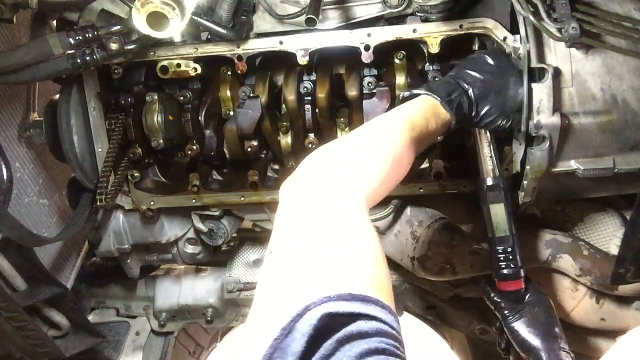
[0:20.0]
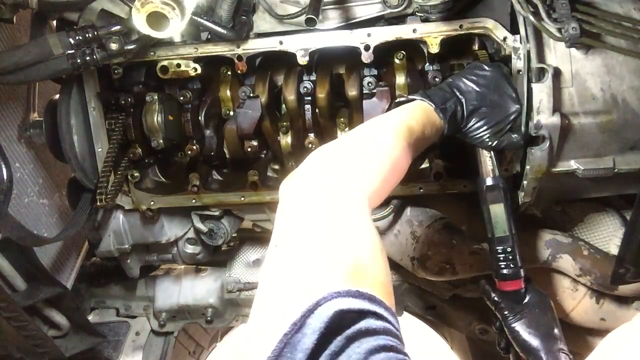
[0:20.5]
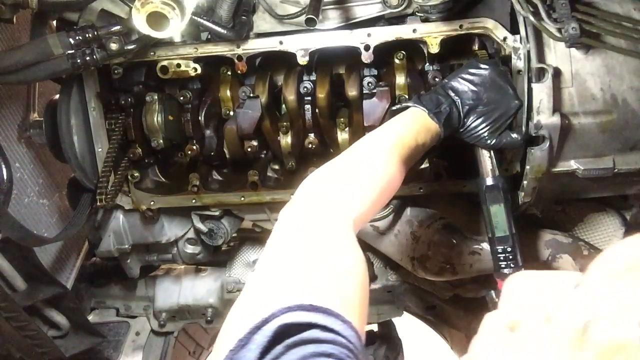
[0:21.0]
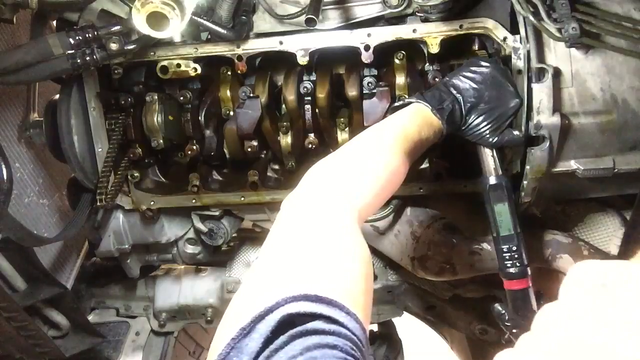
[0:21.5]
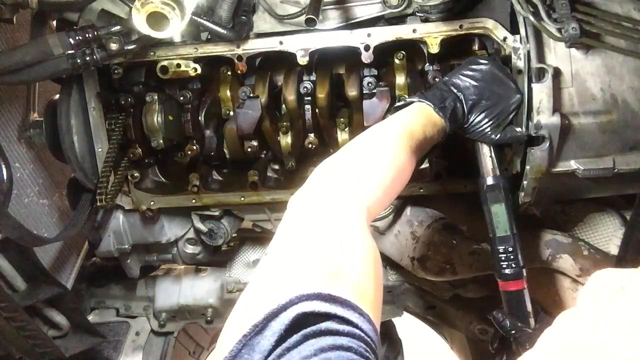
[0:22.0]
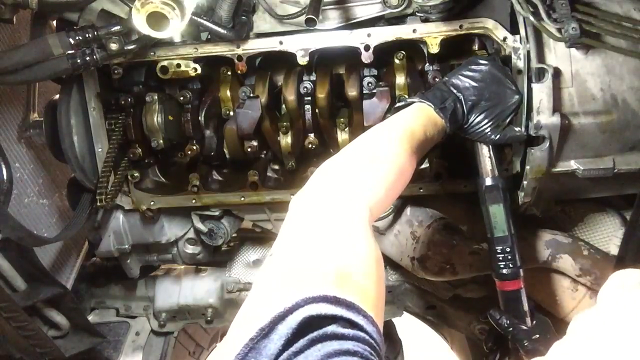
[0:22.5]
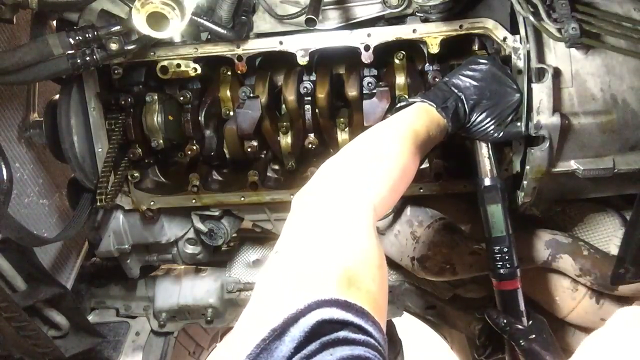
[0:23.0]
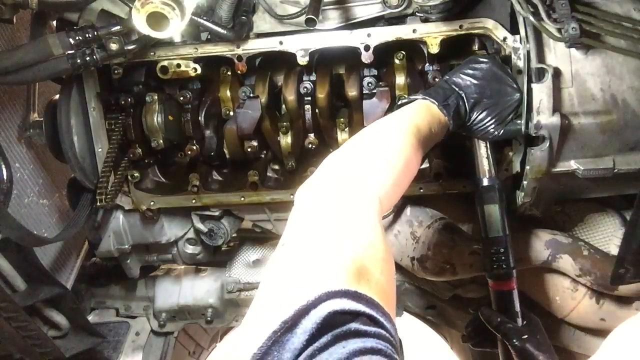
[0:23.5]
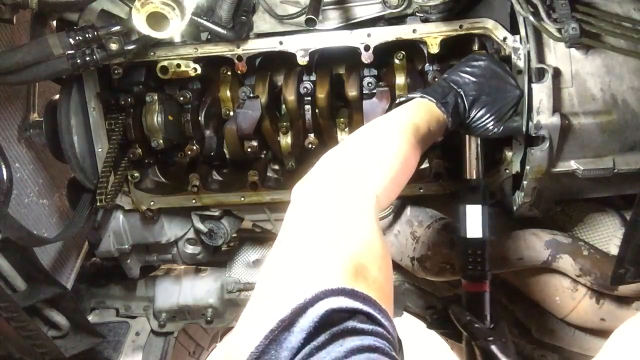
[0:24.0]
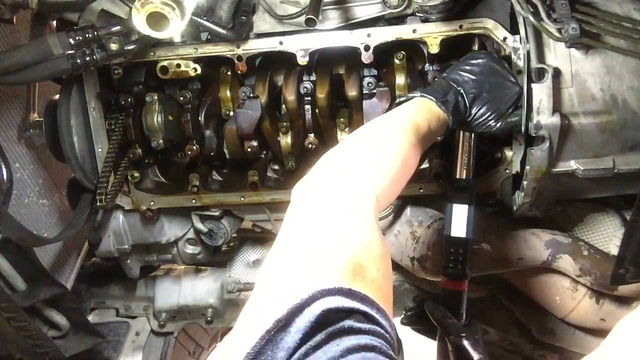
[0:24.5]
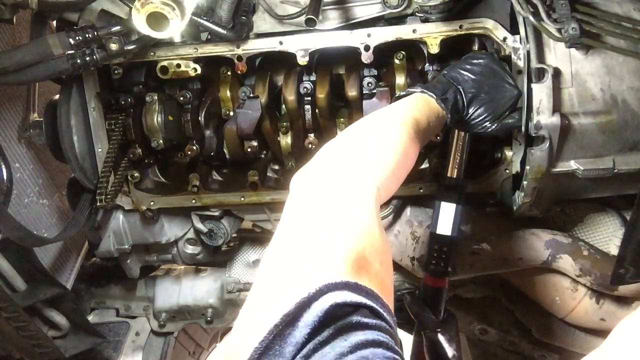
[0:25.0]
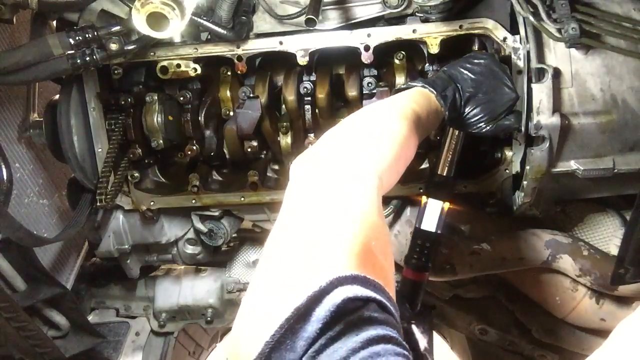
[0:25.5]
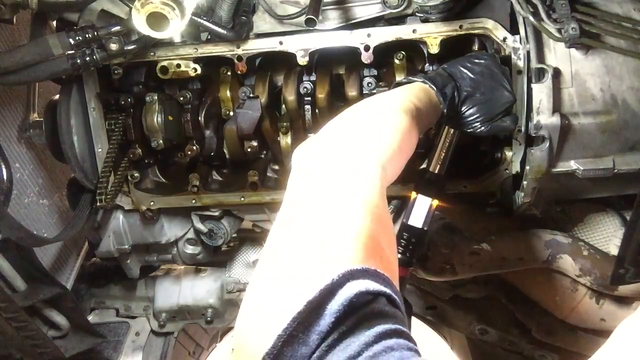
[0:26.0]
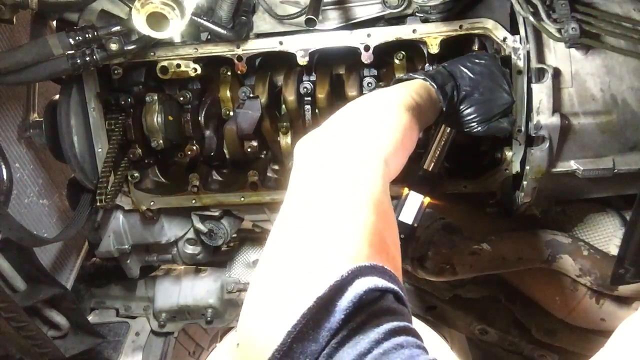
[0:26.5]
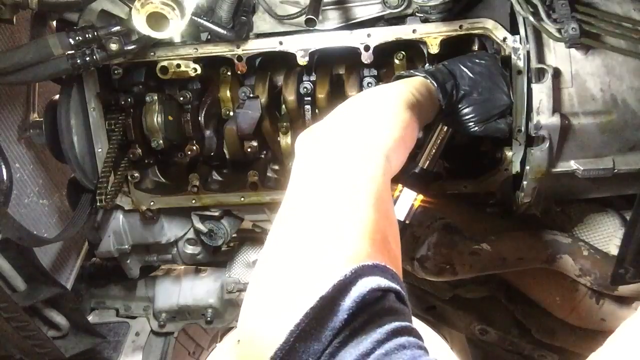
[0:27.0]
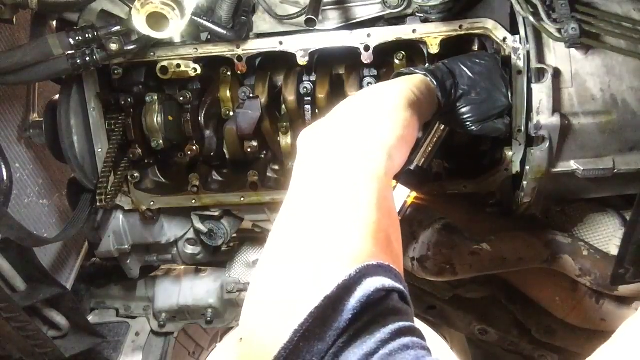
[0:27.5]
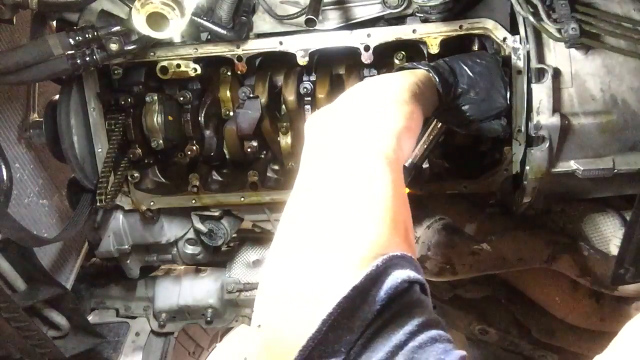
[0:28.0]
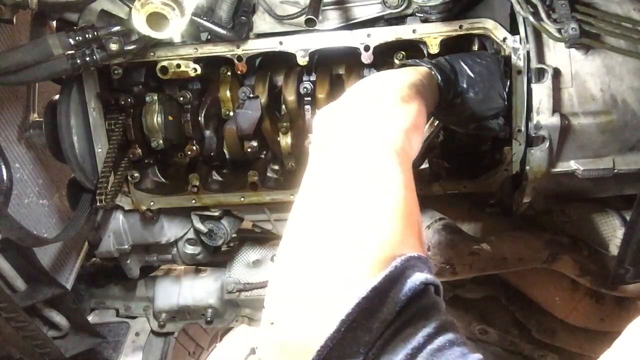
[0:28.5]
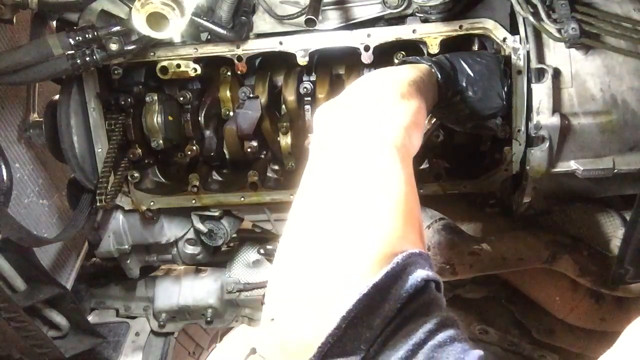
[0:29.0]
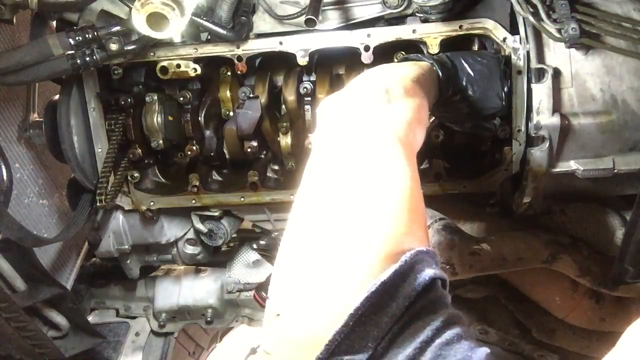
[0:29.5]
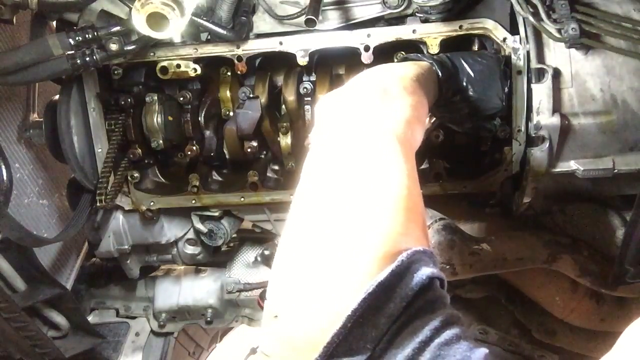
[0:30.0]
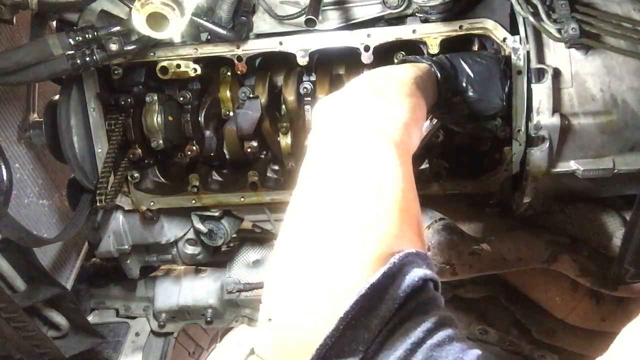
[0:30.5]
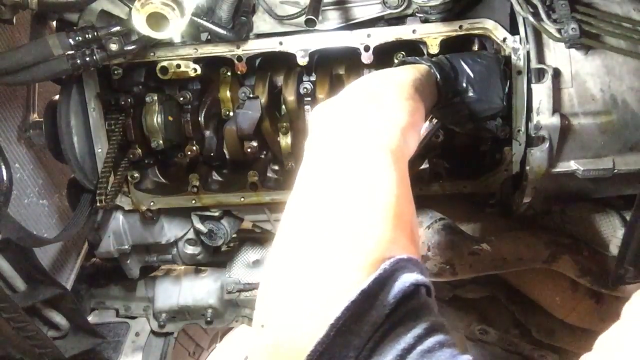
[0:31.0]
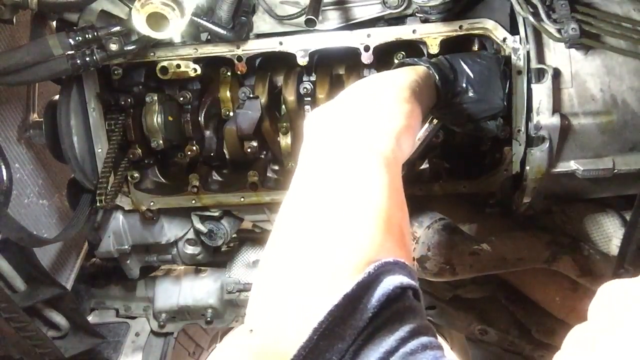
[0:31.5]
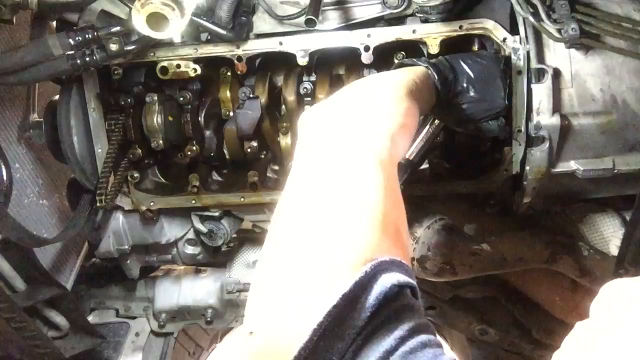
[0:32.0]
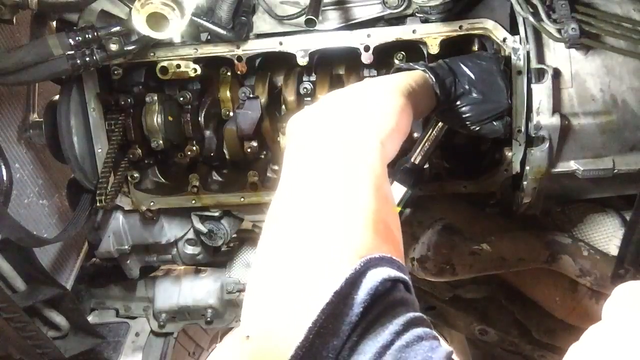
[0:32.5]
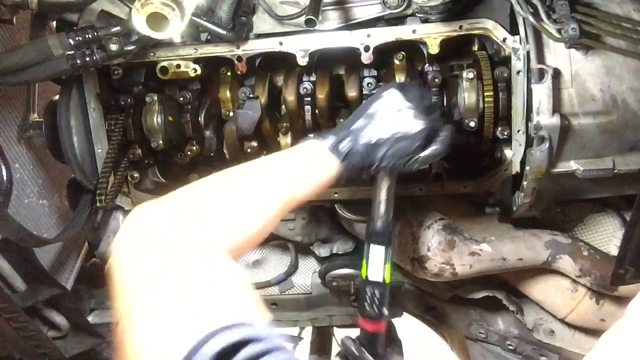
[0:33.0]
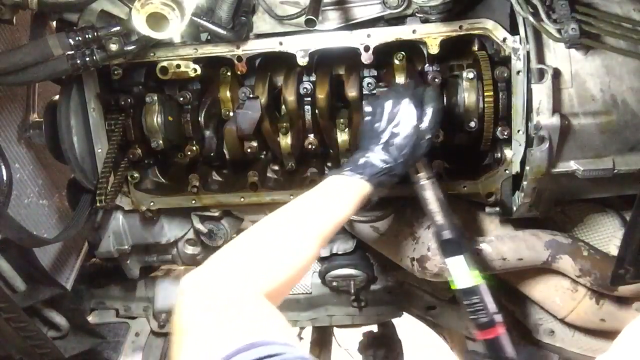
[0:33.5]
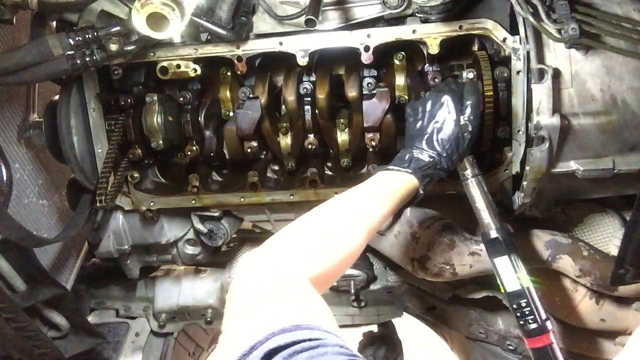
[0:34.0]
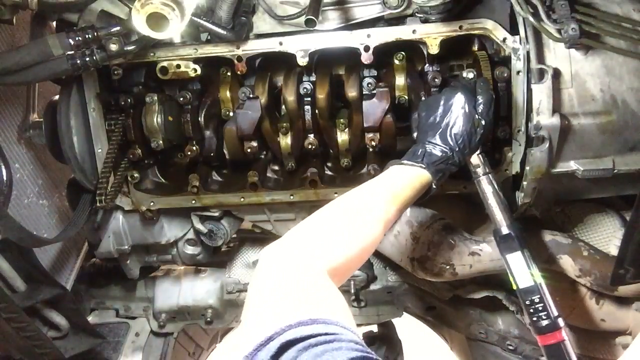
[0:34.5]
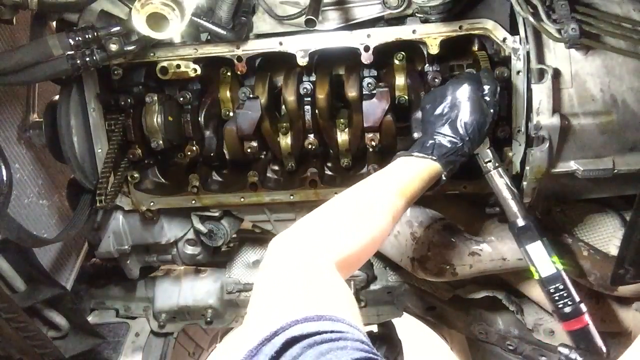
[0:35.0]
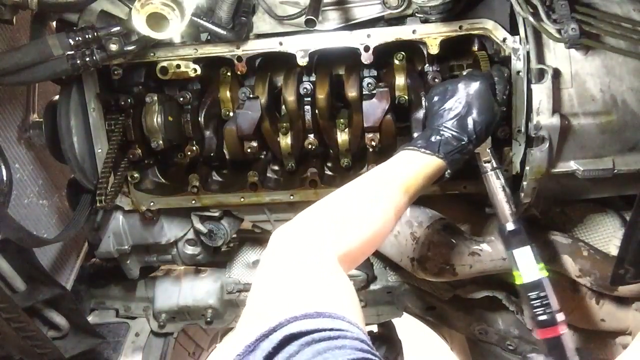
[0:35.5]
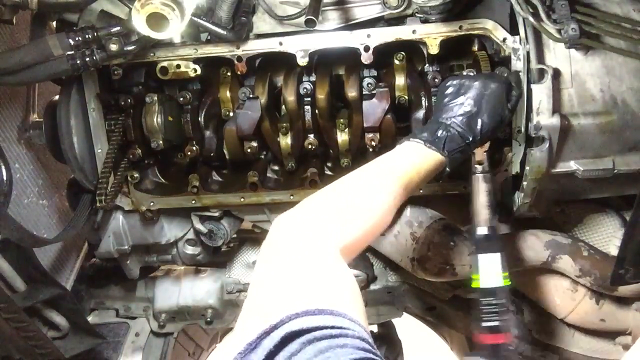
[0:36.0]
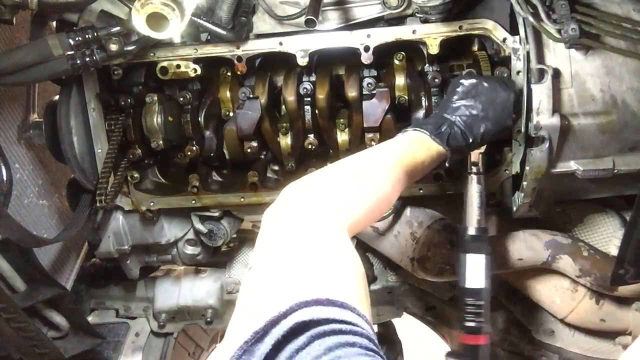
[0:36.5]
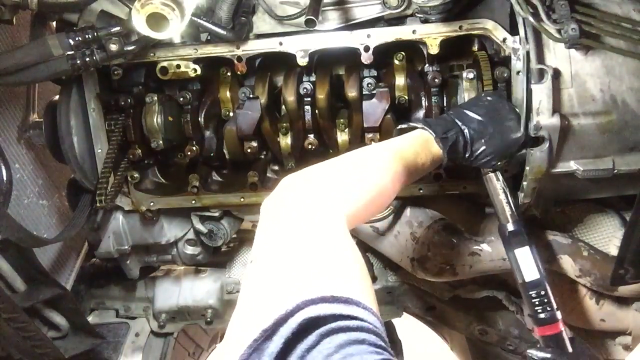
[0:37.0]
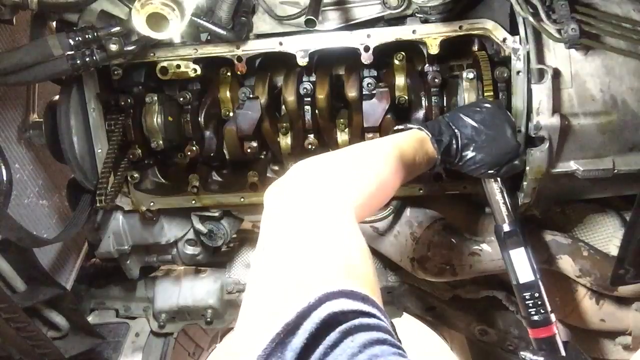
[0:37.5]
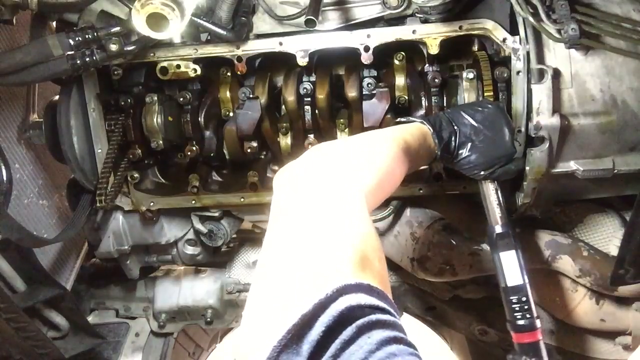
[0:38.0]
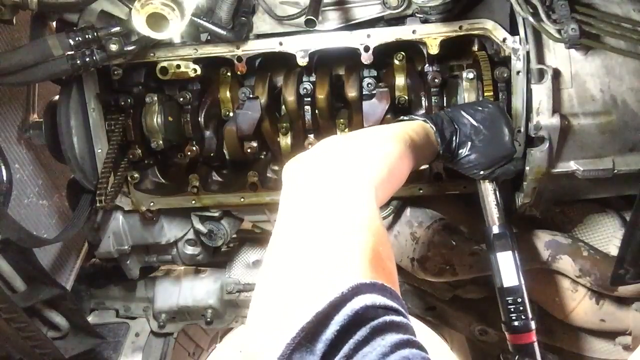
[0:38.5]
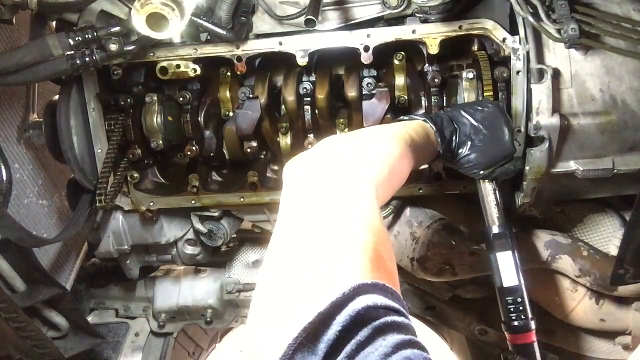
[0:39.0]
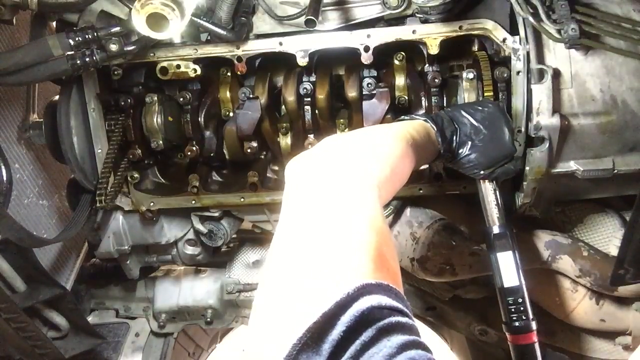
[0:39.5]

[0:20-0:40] The person attaches the device, a rod of black and metal, to the right-hand side of what looks to be an open engine and starts to turn it clockwise. As they rotate it, it appears to provide a lot of resistance, with a lot of tension building up. After rotating it about one eighth of a turn, they take the device off and reattach it, in a kind of wrench motion, apparently tightening something with the tool. They wear shiny black gloves and a short-sleeved t-shirt, and their pale left arm is visible. The view is essentially first-person, hovering above the long engine, which is possibly about three feet long and has a number of exposed mechanisms within it.